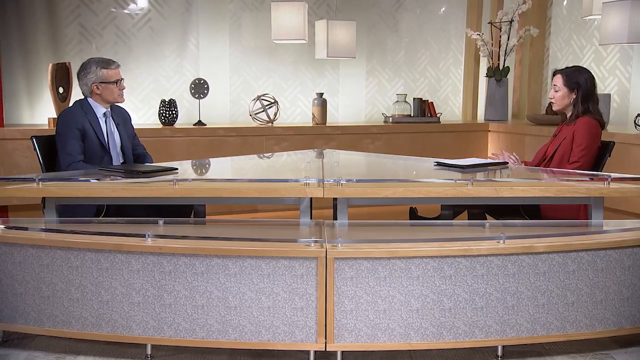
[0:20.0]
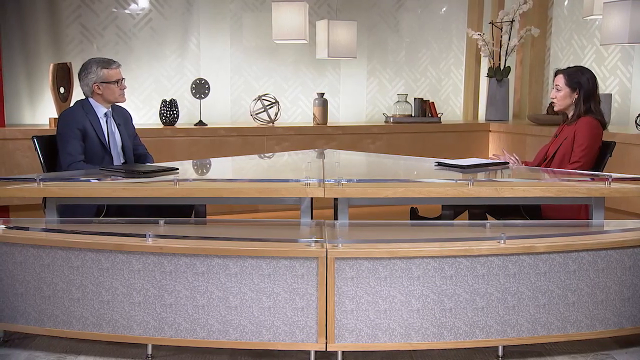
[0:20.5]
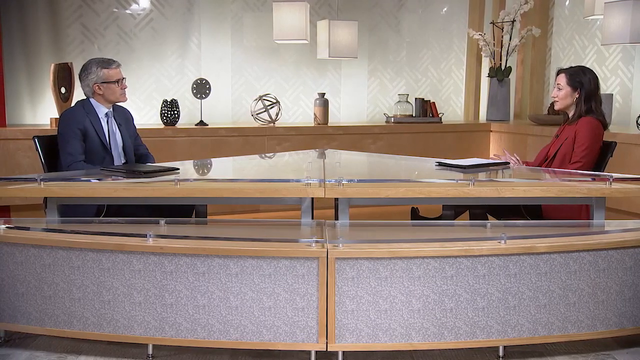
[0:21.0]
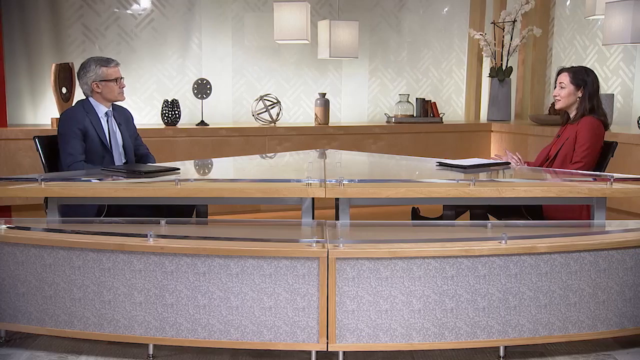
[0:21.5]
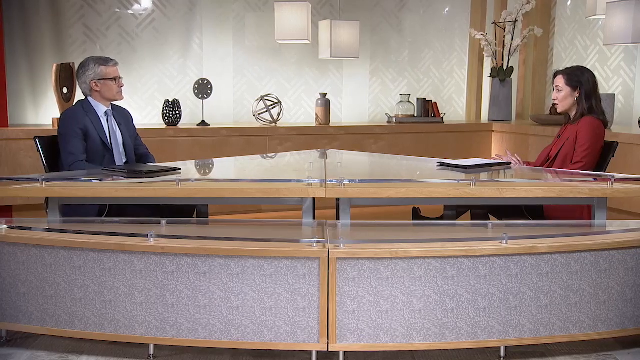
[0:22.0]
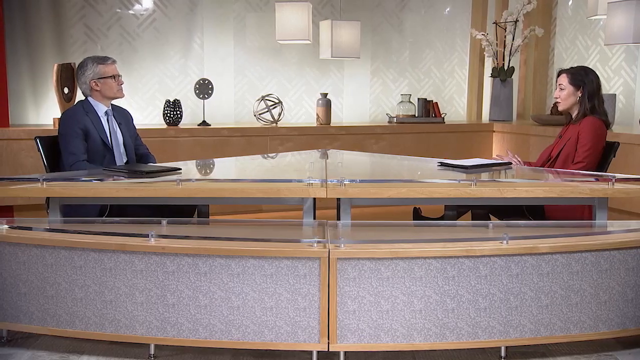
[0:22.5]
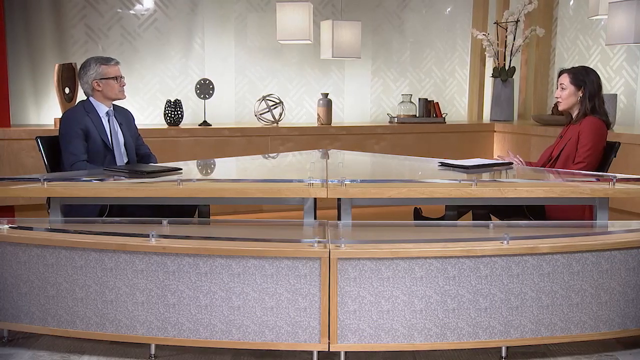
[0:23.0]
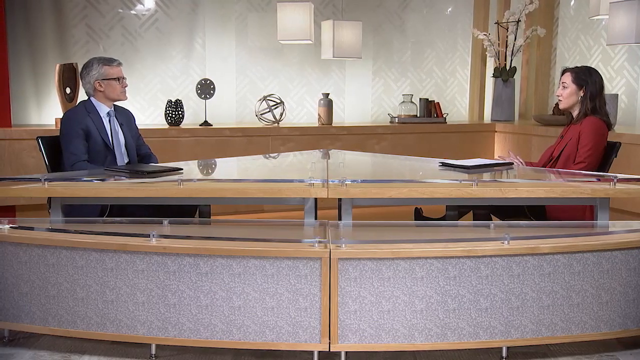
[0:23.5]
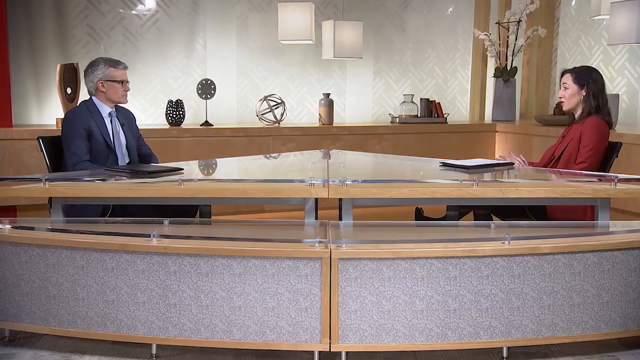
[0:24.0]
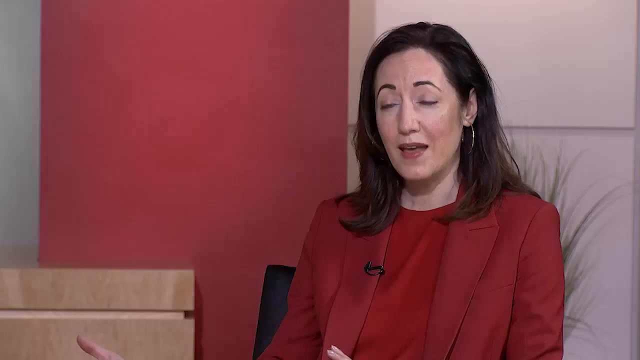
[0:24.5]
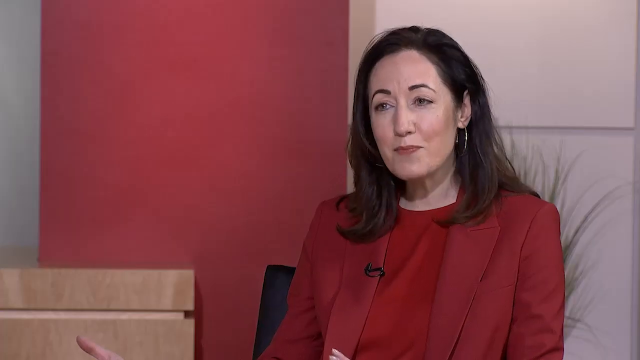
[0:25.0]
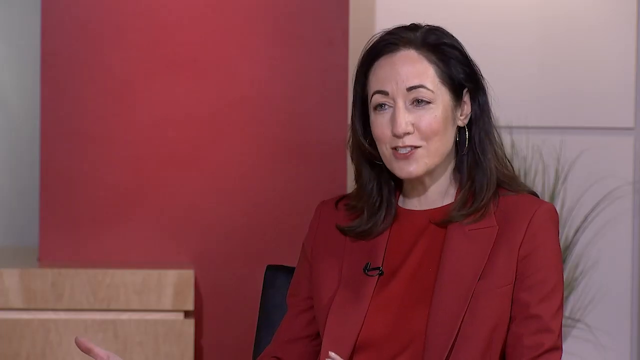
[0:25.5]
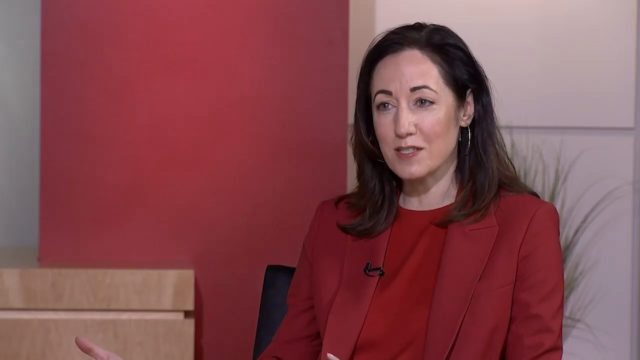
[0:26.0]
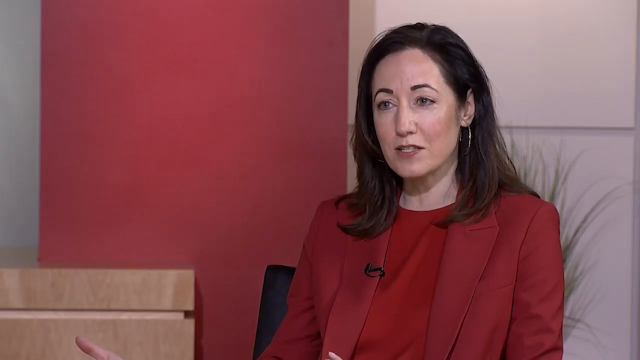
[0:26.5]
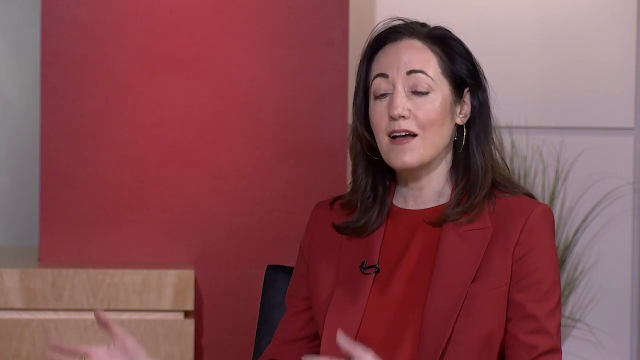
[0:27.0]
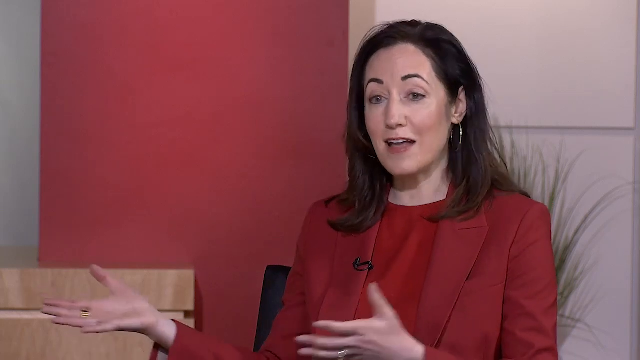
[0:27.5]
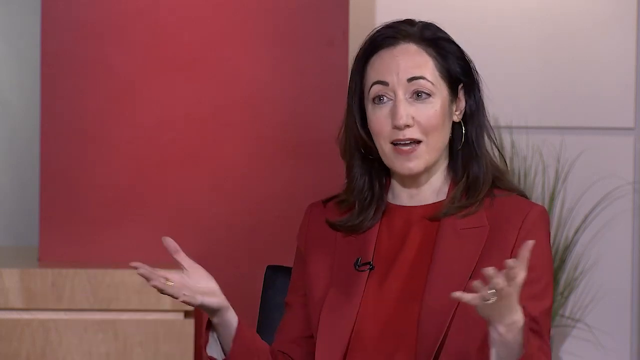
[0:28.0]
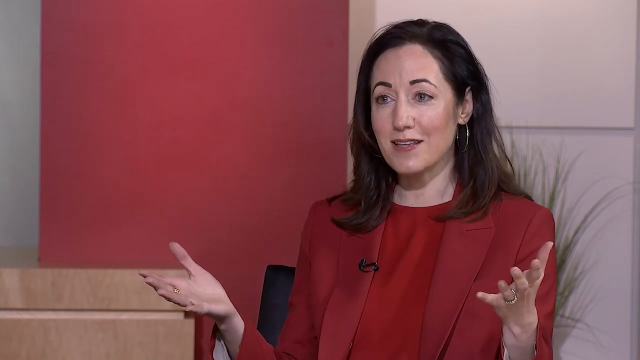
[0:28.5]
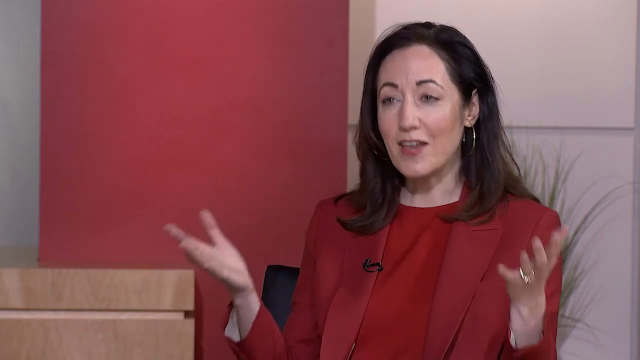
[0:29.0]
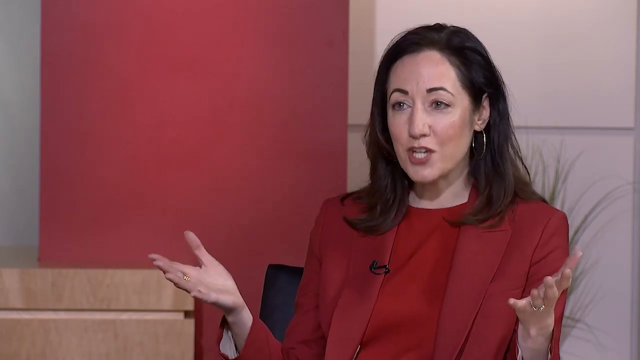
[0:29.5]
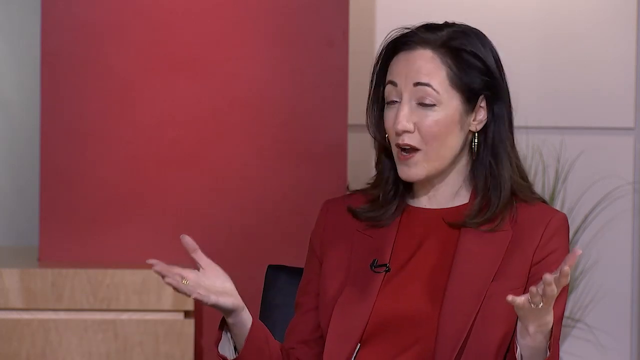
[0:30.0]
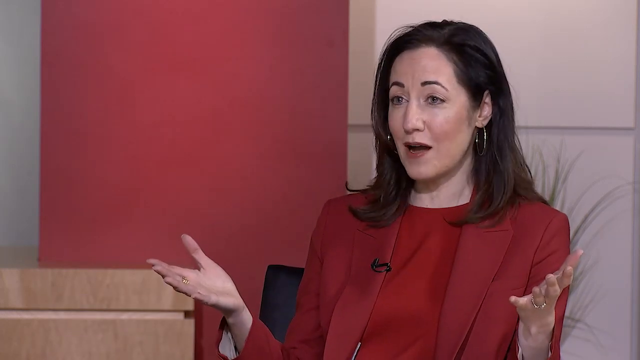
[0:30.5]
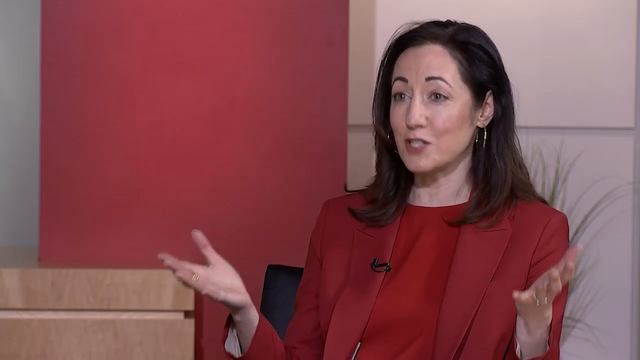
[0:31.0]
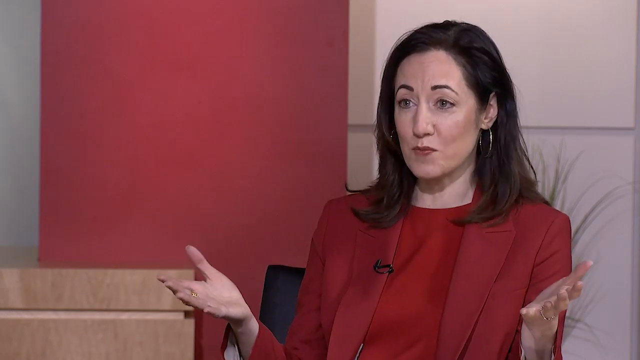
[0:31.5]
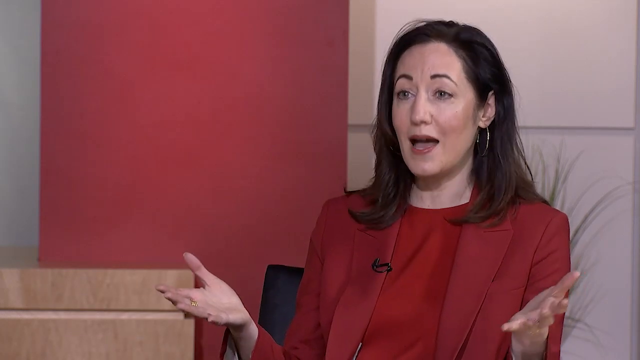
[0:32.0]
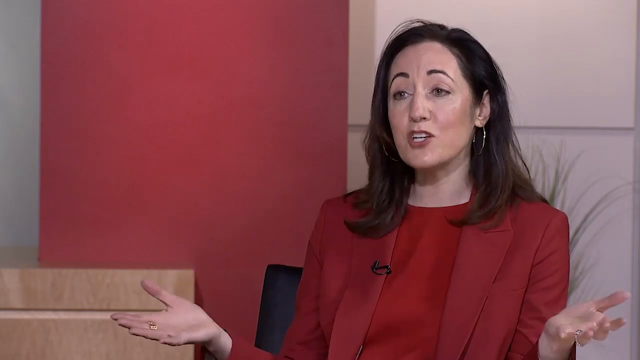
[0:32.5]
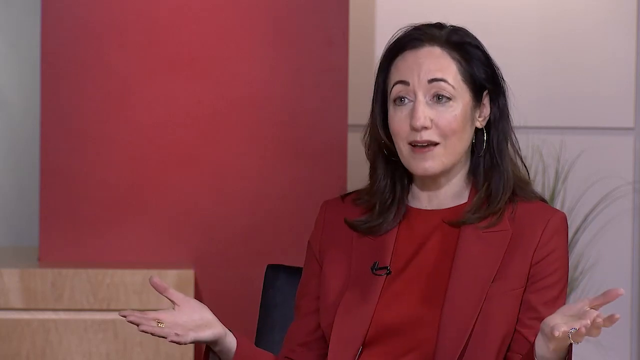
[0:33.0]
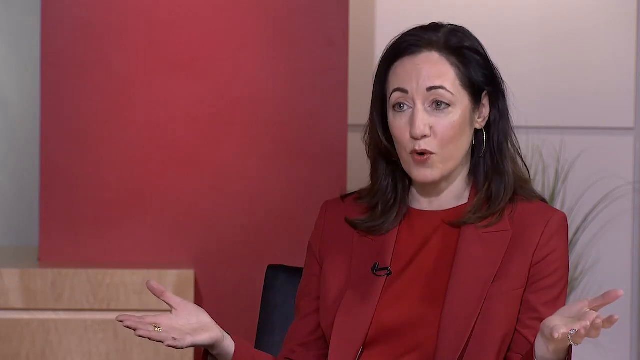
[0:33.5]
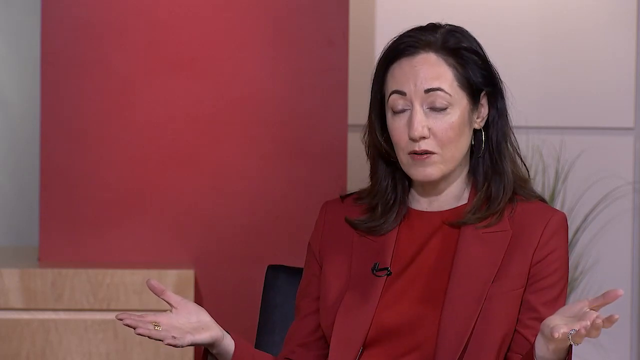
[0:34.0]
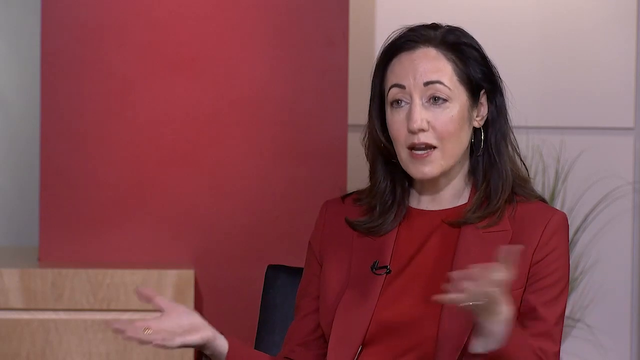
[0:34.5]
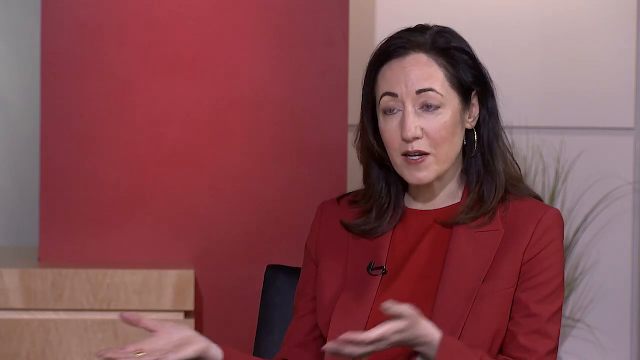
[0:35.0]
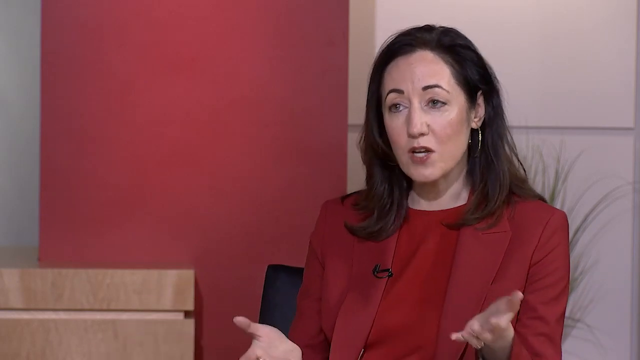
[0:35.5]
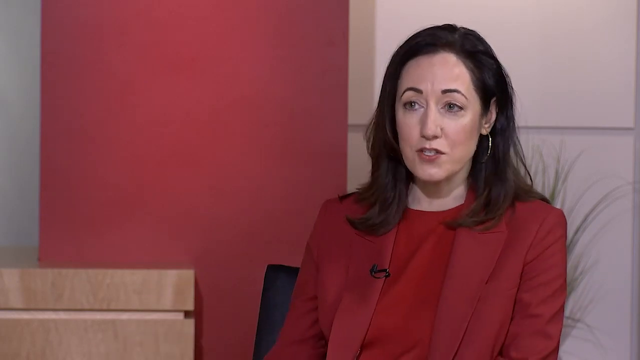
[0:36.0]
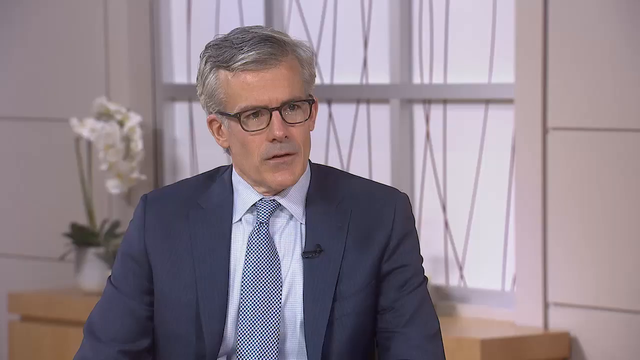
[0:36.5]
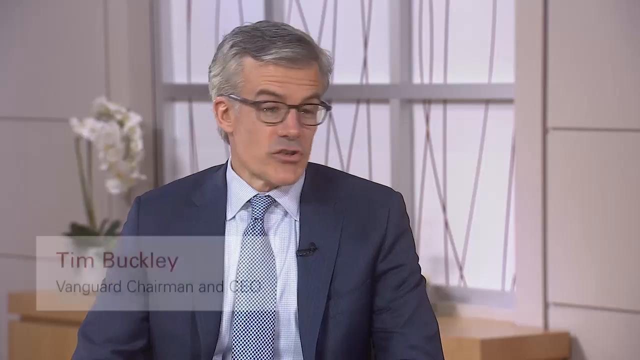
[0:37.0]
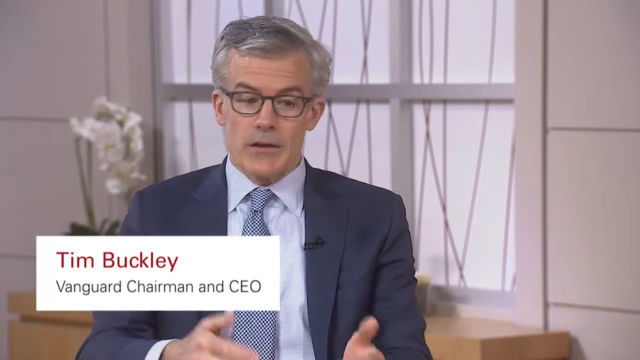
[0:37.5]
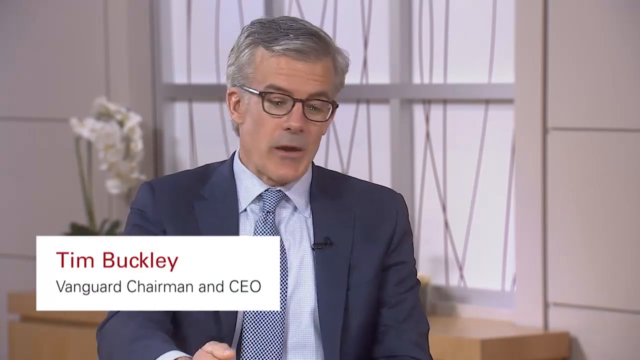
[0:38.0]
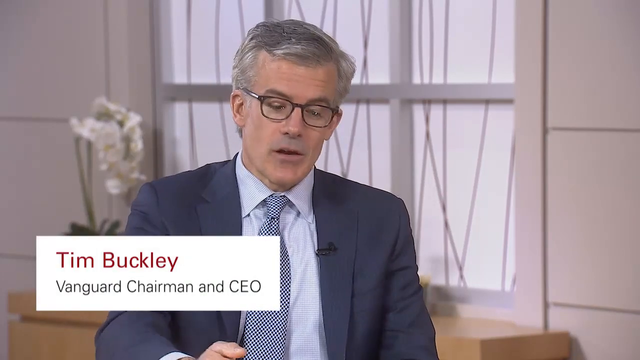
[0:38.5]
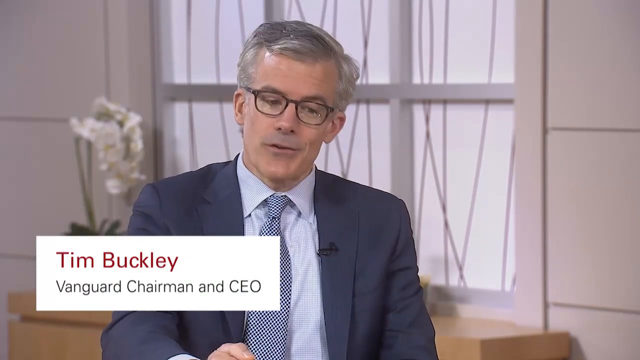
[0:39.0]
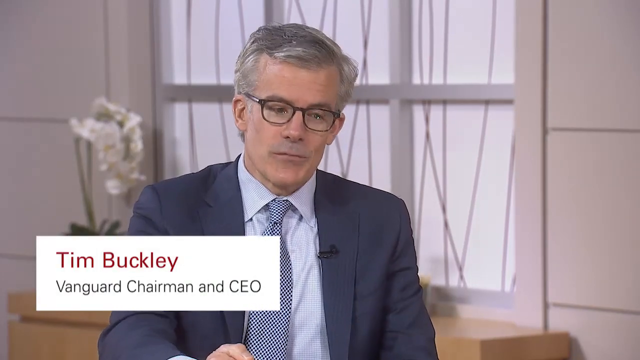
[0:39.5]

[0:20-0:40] The two people face one another in the studio, talking, presumably about investment strategy. The big desk they sit at is triangular at the top, with some sort of shatterproof plastic or glass at the top. Behind them is a kind of long dresser table holding a variety of knickknacks, and in the background lights hang from the ceiling in front of a white wall. The atmosphere is very formal and serious. The camera moves to a close-up of the woman, who is very expressive with her hands as she speaks, holding them out in front of her and gesturing; the man gestures too. Then the man is shown, identified as Tim Buckley, Vanguard Chairman and CEO.